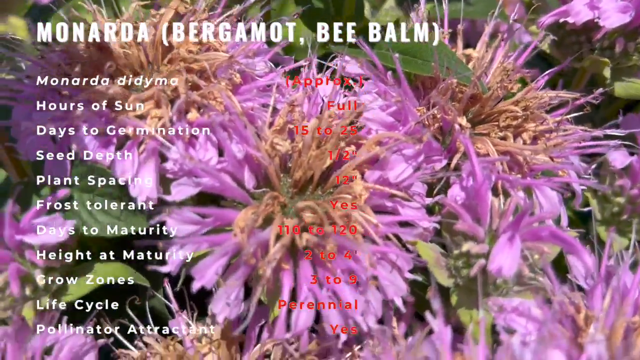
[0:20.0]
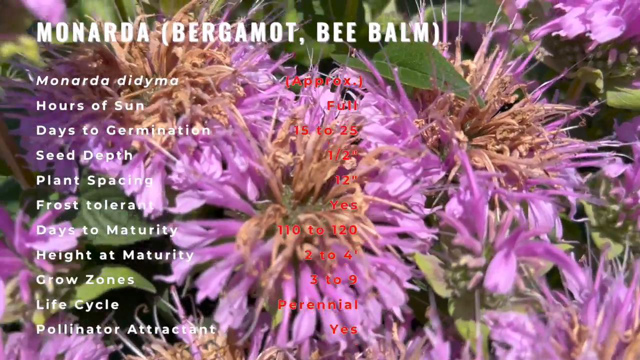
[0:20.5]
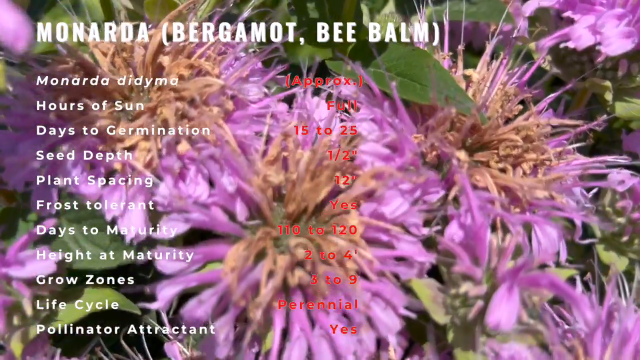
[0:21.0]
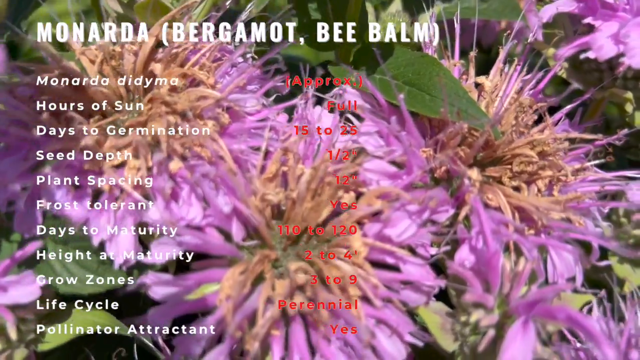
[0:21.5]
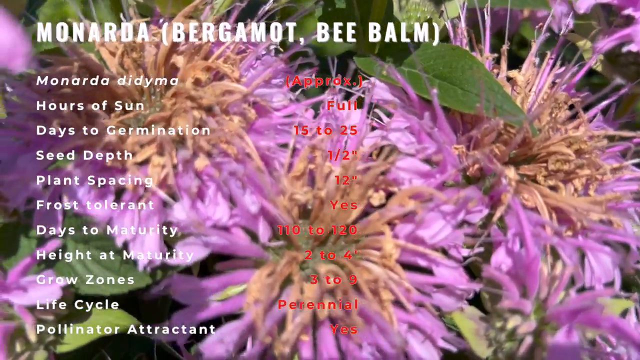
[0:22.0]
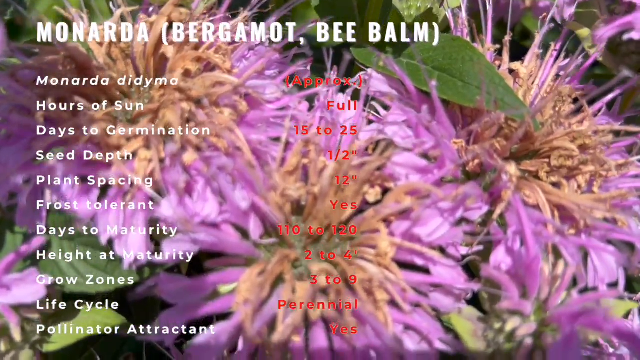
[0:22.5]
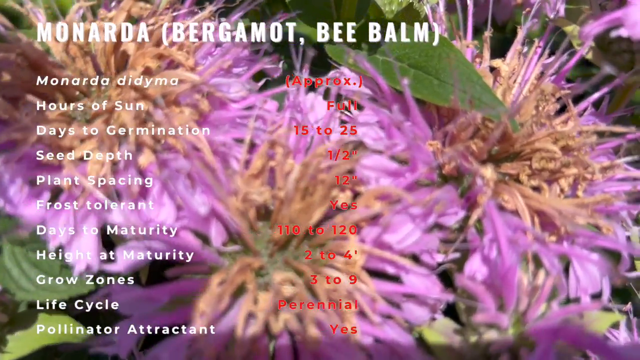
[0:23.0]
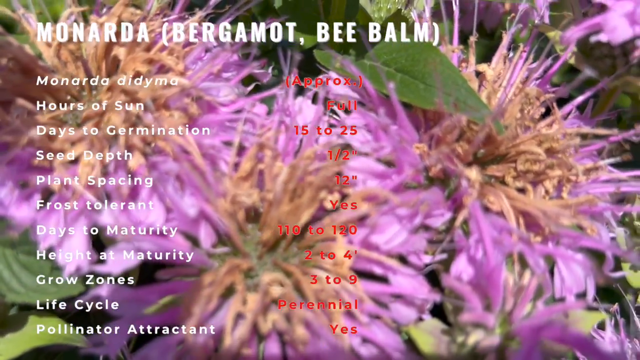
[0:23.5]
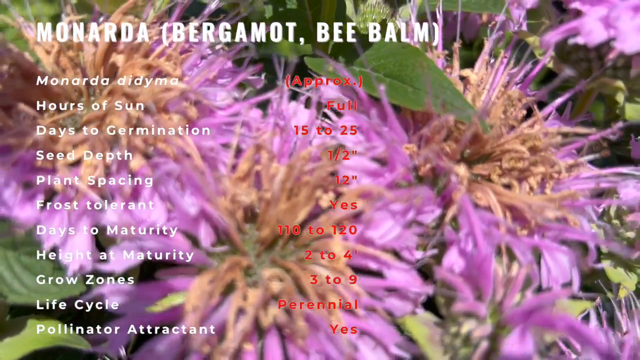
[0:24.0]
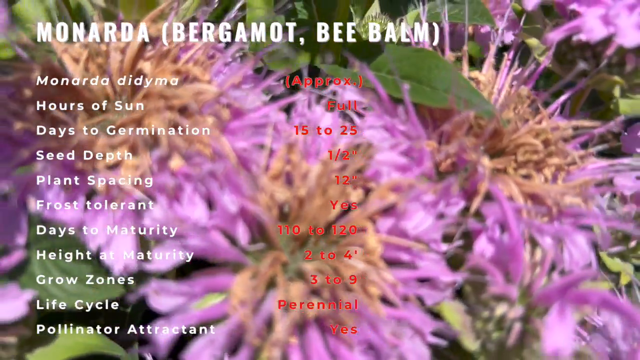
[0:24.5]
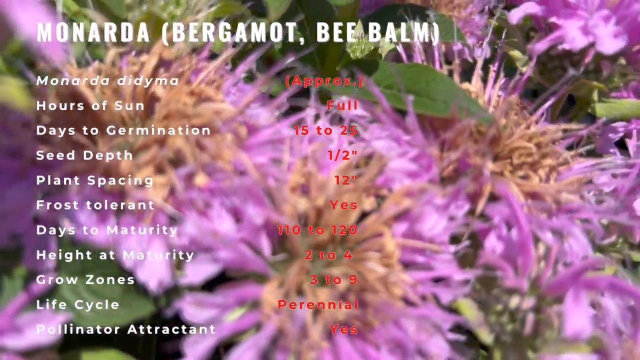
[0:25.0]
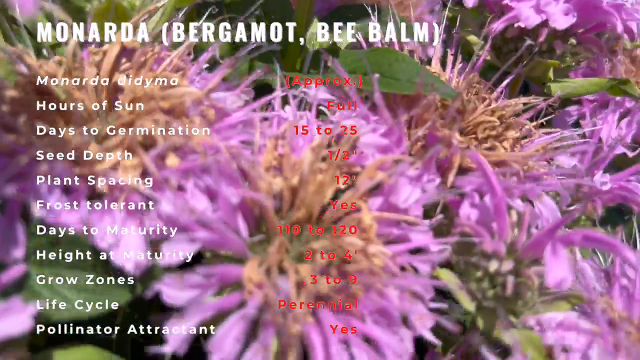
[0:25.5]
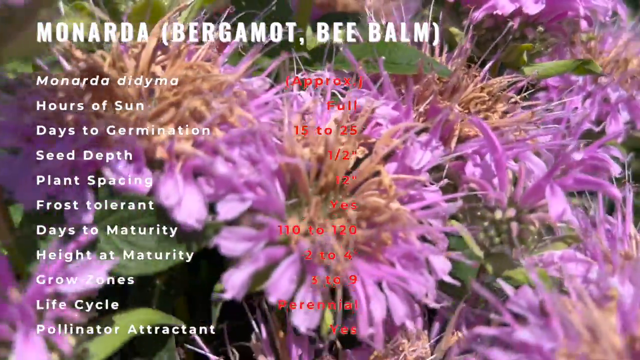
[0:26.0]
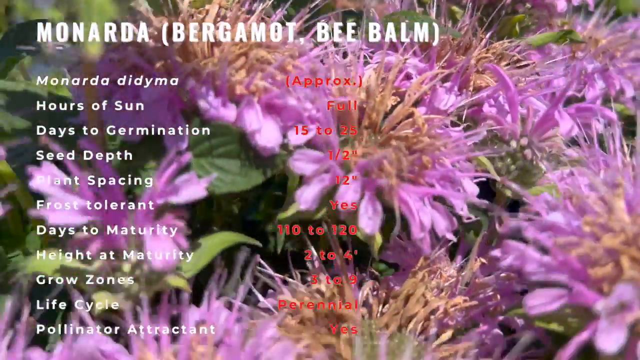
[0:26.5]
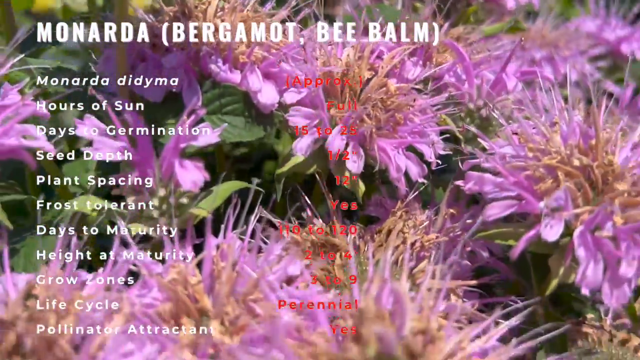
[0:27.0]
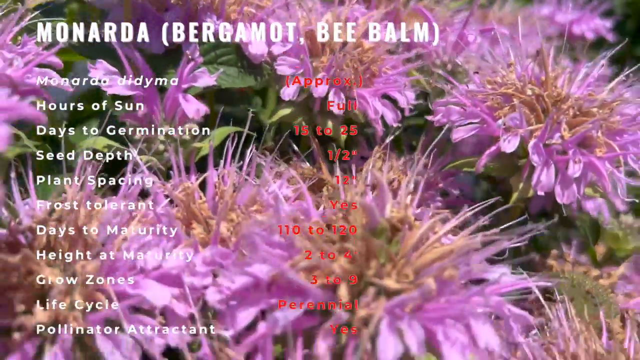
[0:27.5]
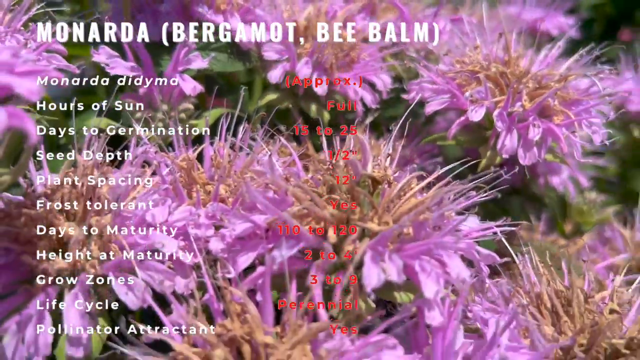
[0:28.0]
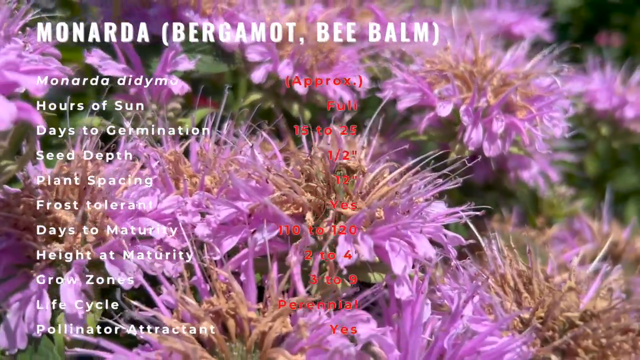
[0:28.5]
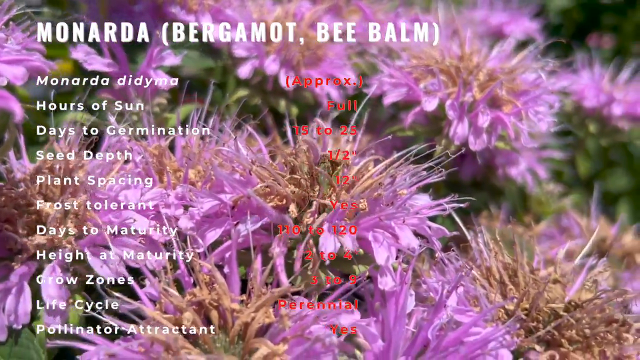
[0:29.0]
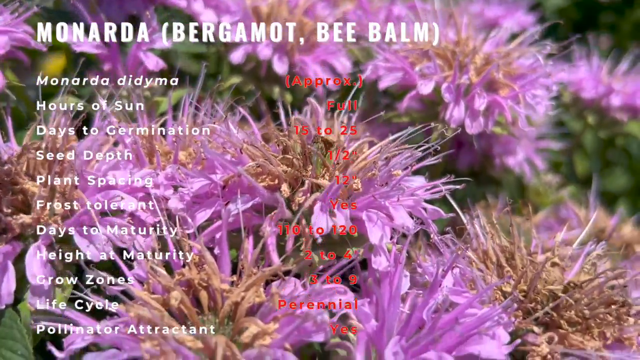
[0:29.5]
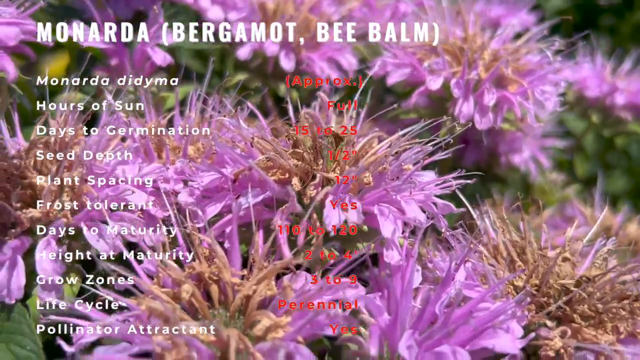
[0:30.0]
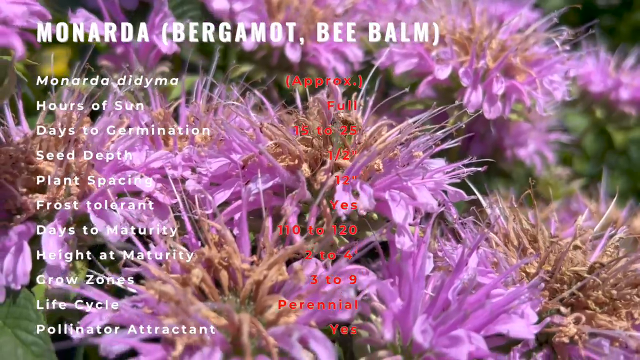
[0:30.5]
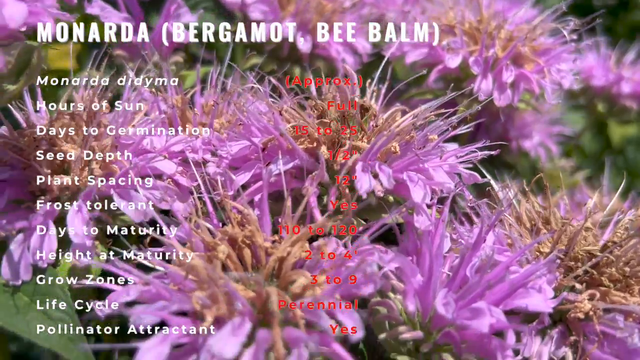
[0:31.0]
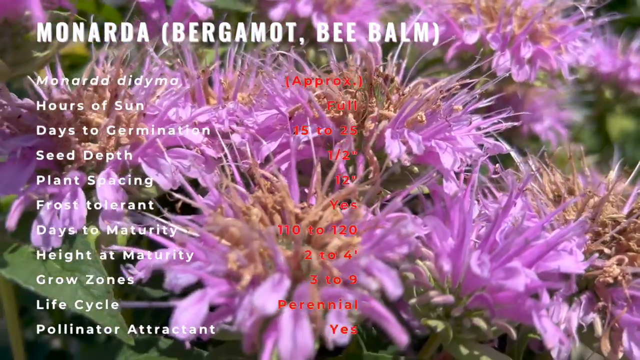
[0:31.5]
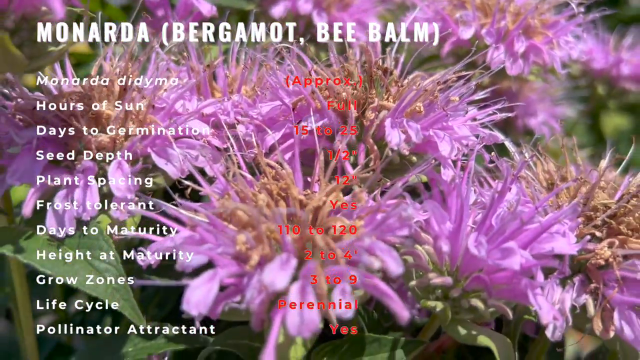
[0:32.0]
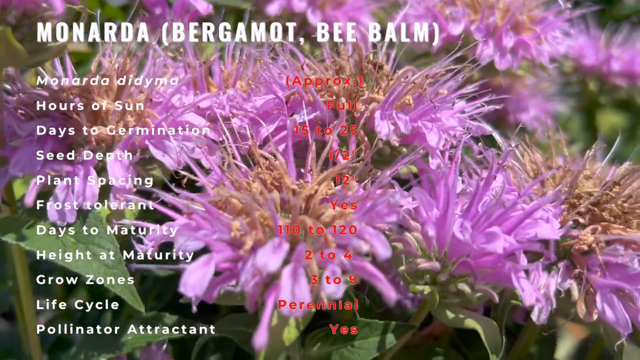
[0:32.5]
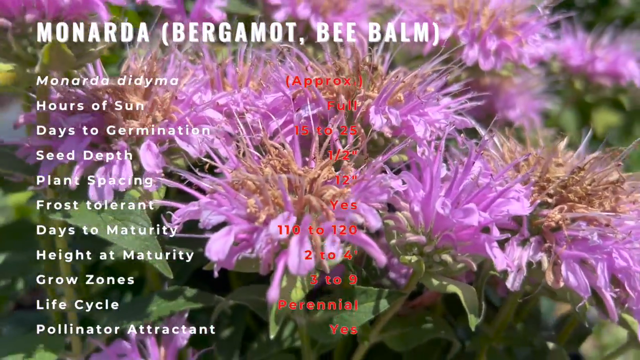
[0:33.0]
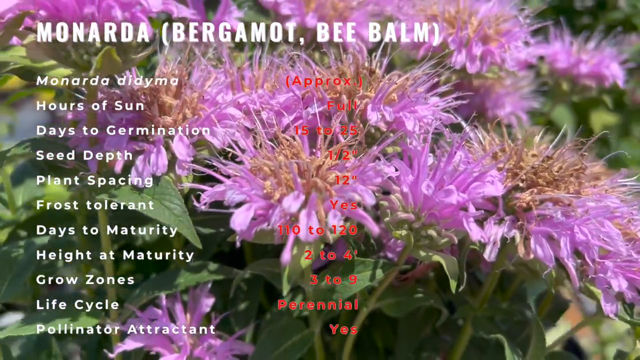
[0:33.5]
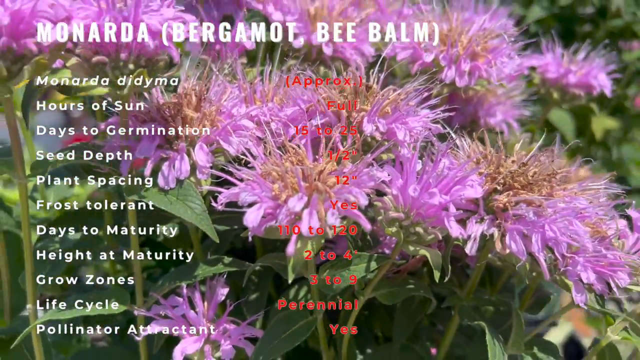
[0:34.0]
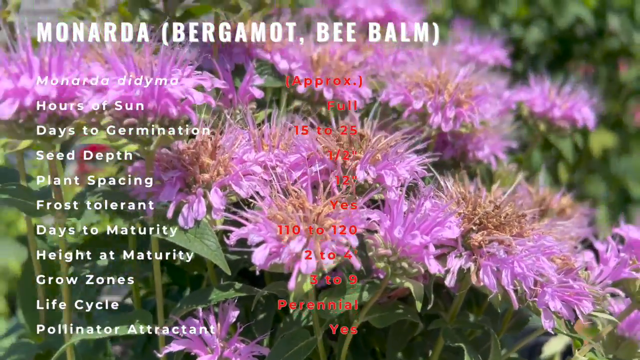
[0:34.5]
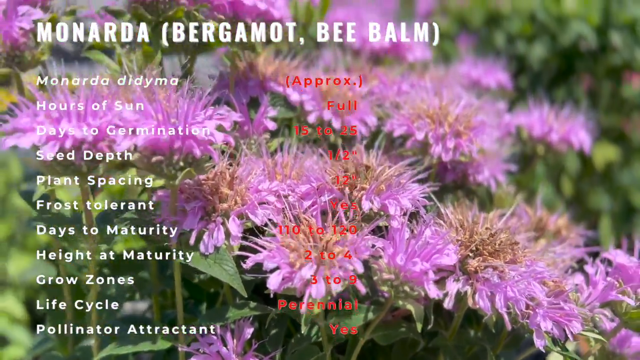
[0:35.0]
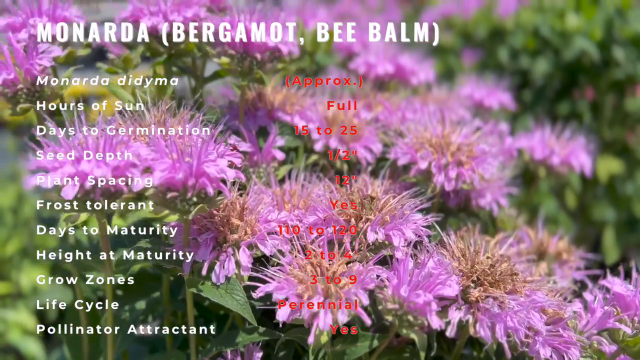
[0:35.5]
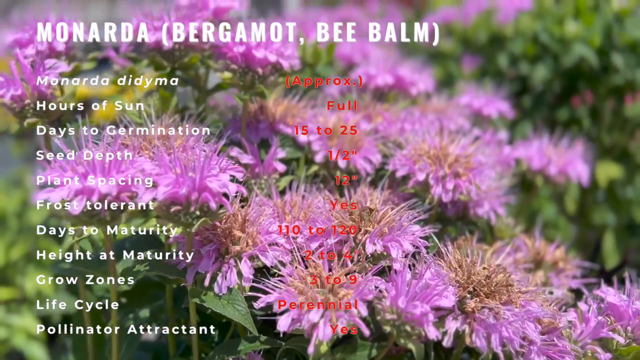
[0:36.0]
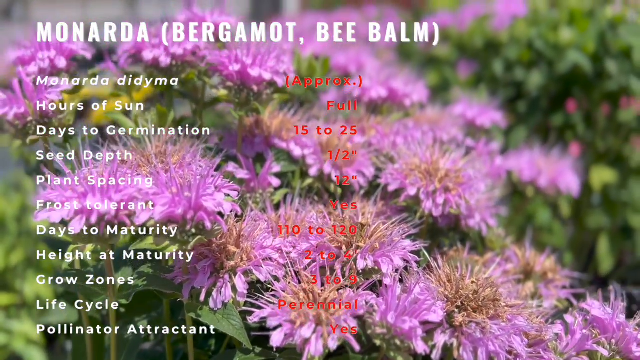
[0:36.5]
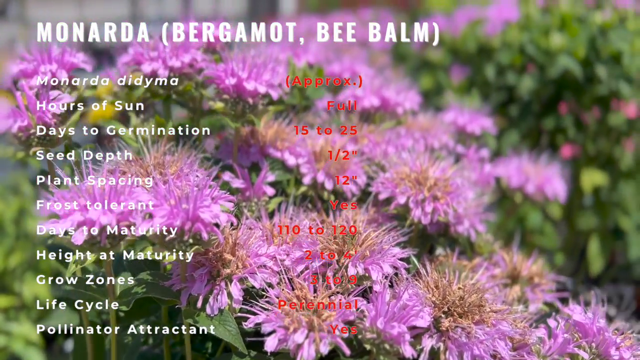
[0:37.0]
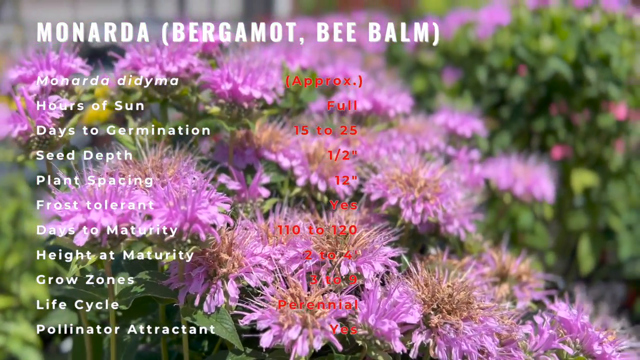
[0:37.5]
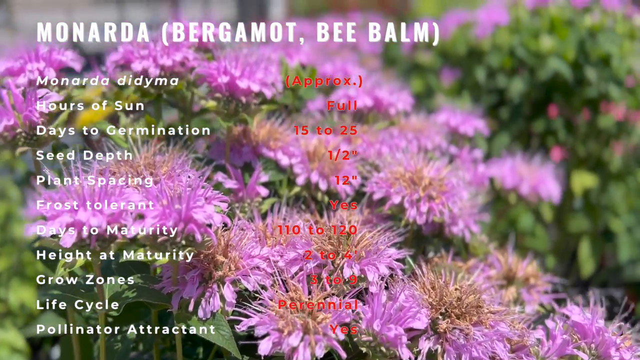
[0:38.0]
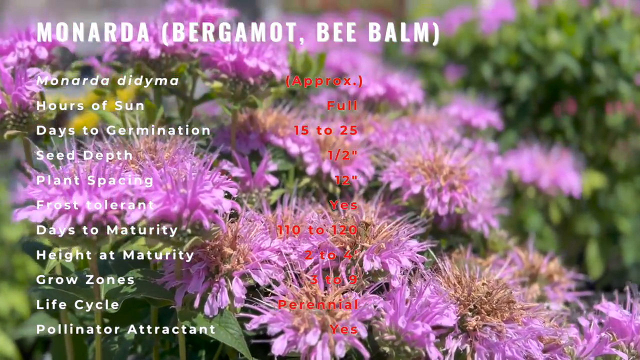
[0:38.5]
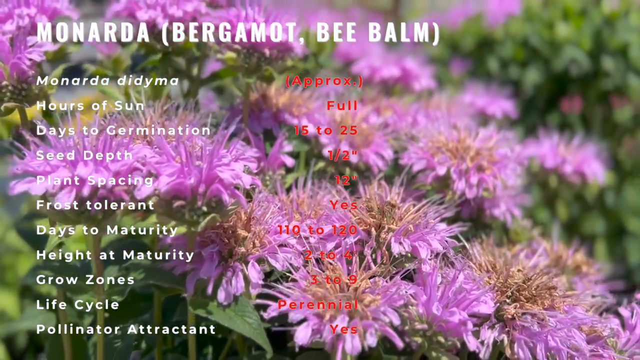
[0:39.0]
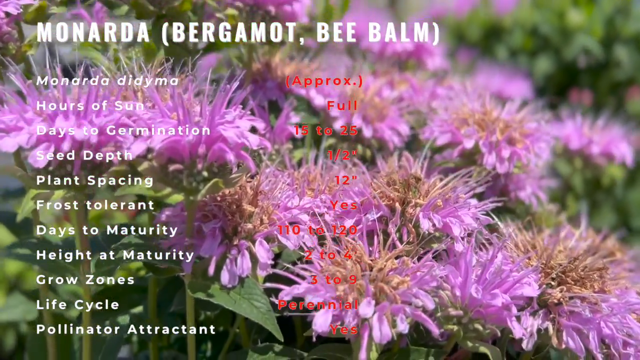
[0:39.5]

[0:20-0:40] Violet flowers grow out of a plant with little green leaves. The flowers are a lot bigger than the leaves and have tiny petals that are kind of clustered; some seem to be drying out already, so their middles look brown. In the forefront of the screen is a list of the plant's characteristics. The plant's name appears to be "Monarda", and it is also named "Bee Balm". Parts of the long list include the hours of sun, the seed depth, the days to maturity and the frost tolerance. The camera then pans out to show a cluster of purple flowers, some looking a lot younger and some older; the older ones are kind of dry in the middle, while the younger ones look completely purple.